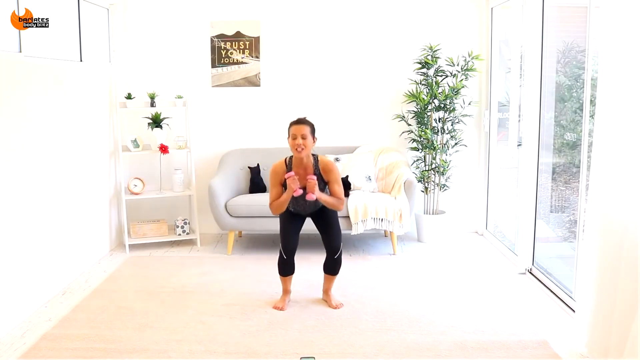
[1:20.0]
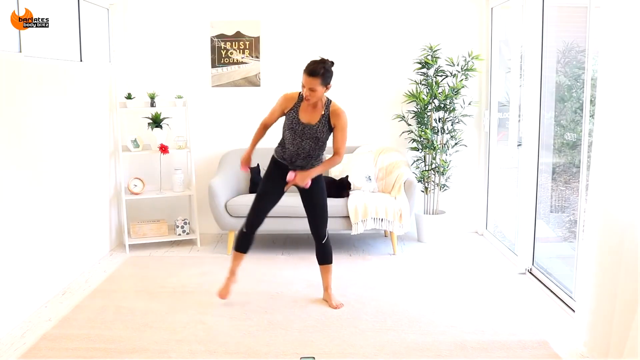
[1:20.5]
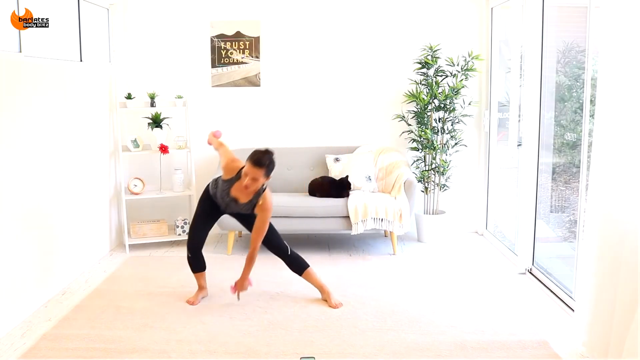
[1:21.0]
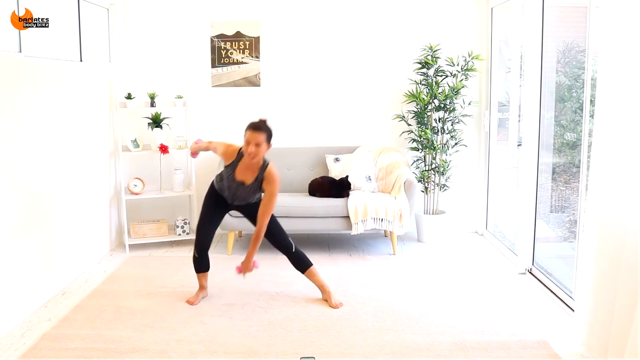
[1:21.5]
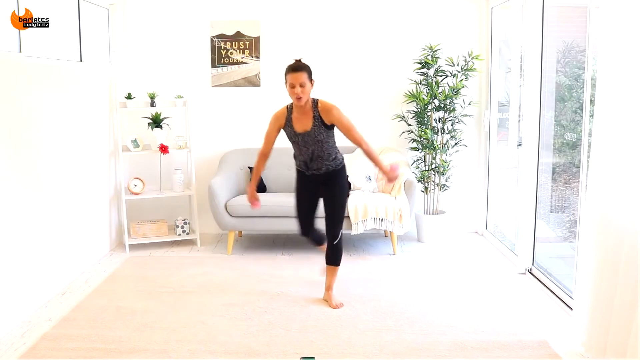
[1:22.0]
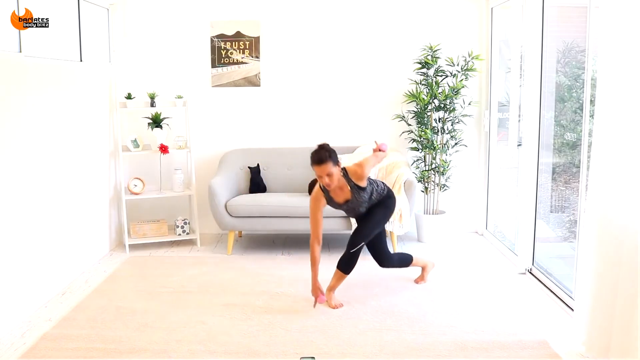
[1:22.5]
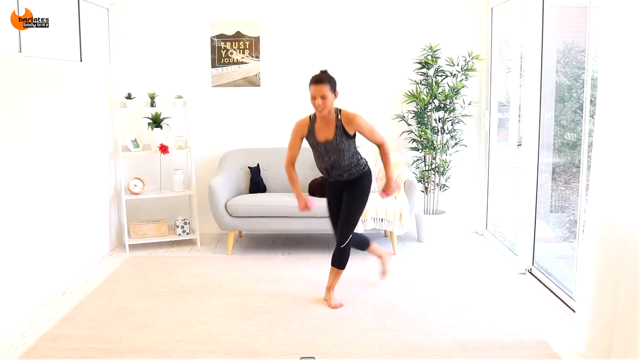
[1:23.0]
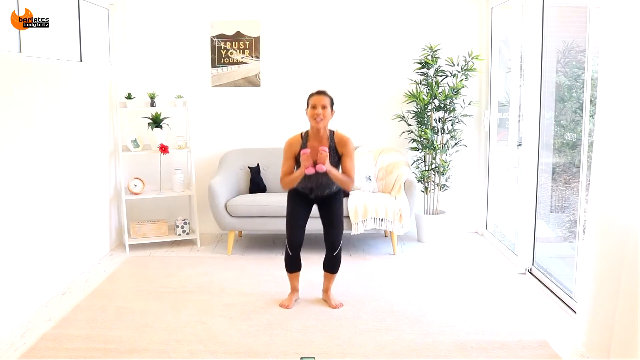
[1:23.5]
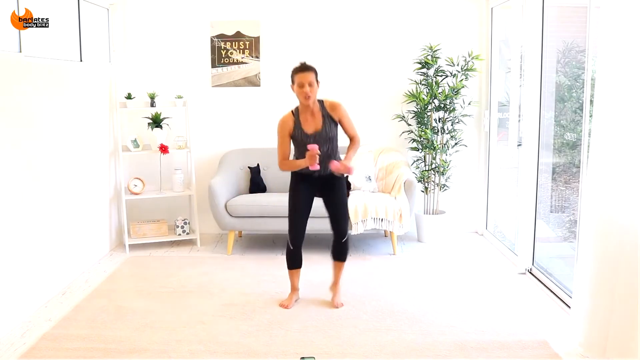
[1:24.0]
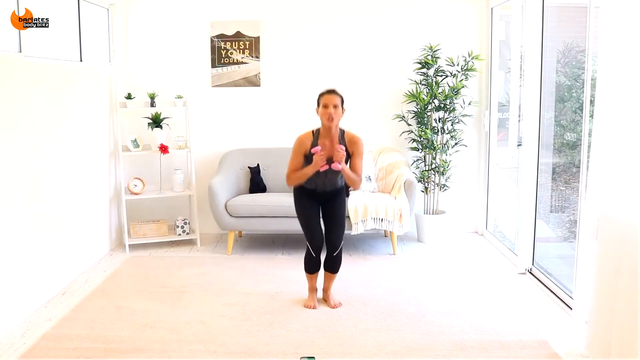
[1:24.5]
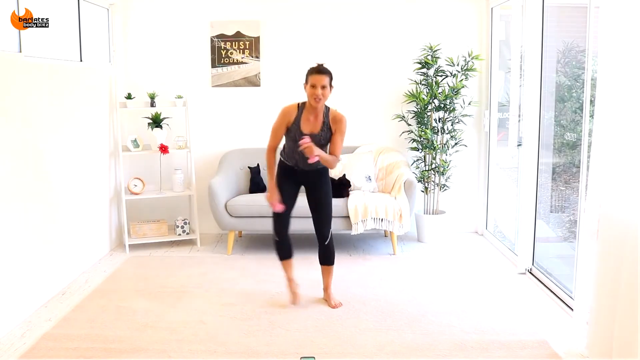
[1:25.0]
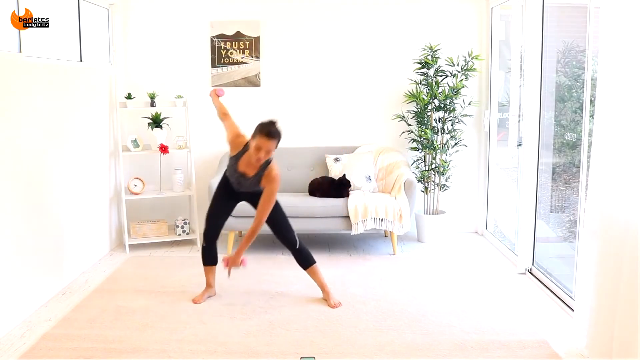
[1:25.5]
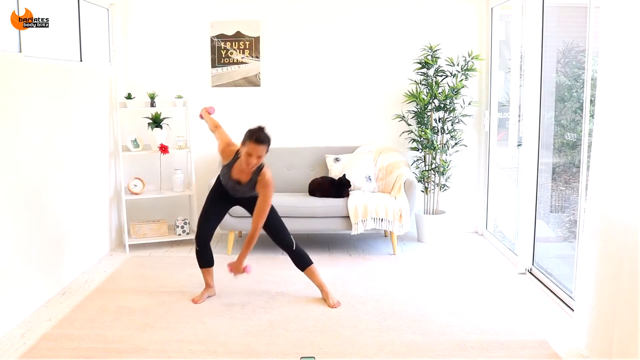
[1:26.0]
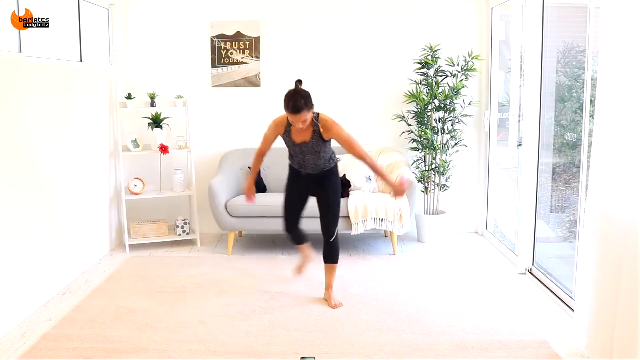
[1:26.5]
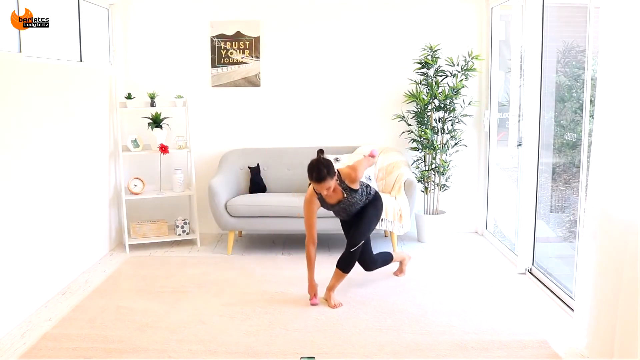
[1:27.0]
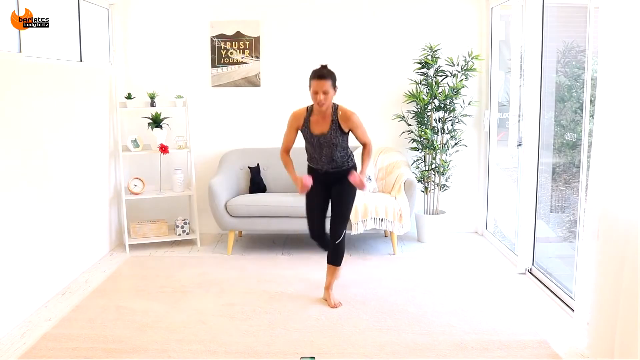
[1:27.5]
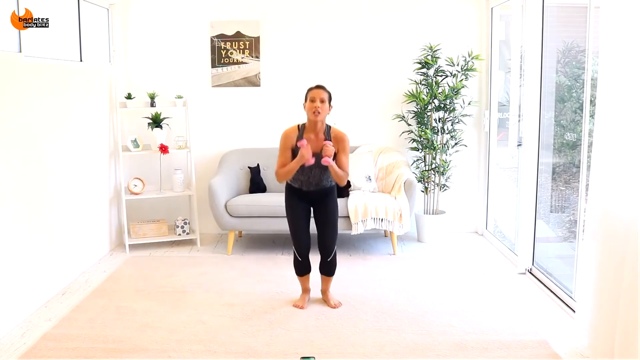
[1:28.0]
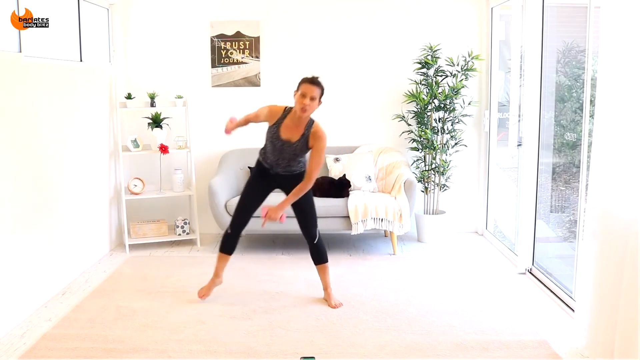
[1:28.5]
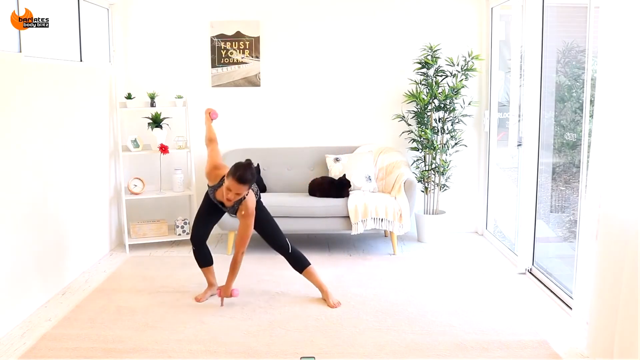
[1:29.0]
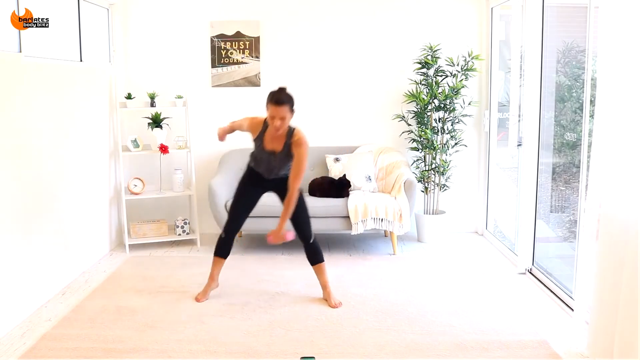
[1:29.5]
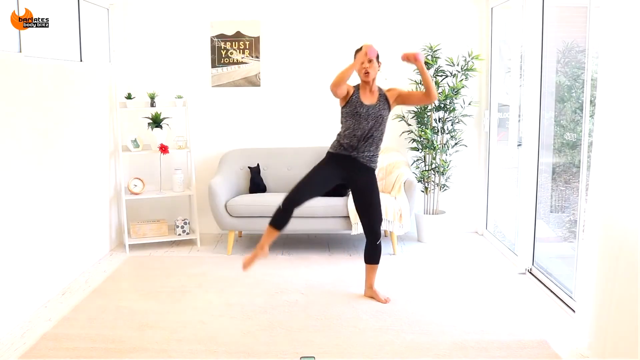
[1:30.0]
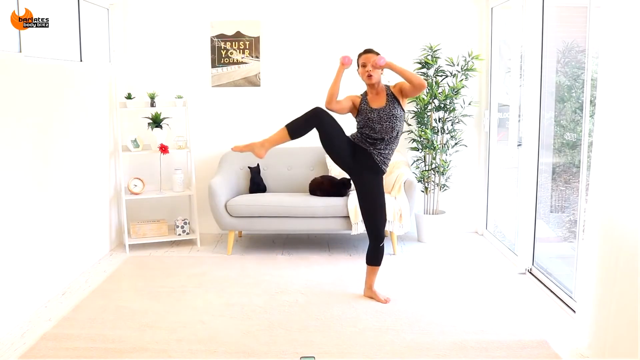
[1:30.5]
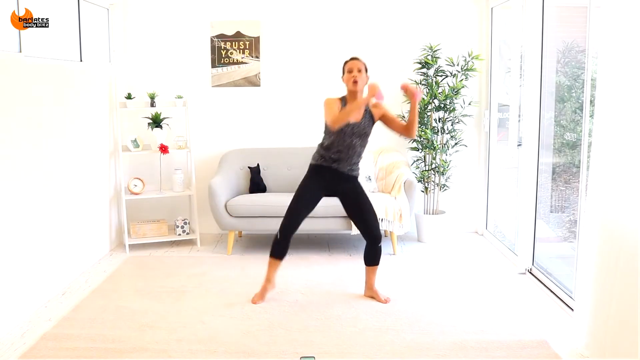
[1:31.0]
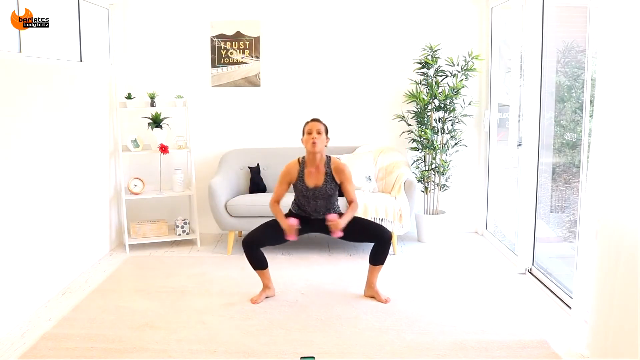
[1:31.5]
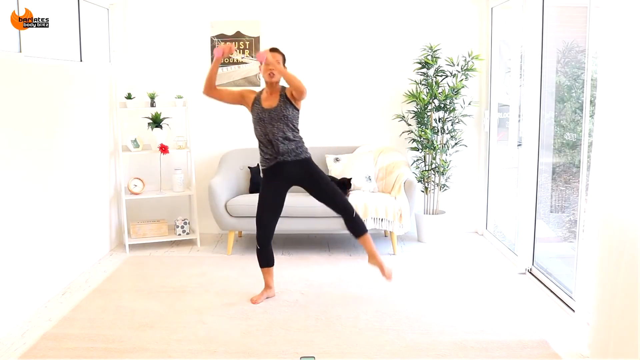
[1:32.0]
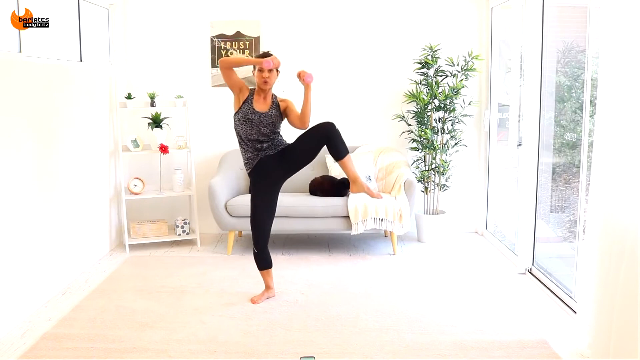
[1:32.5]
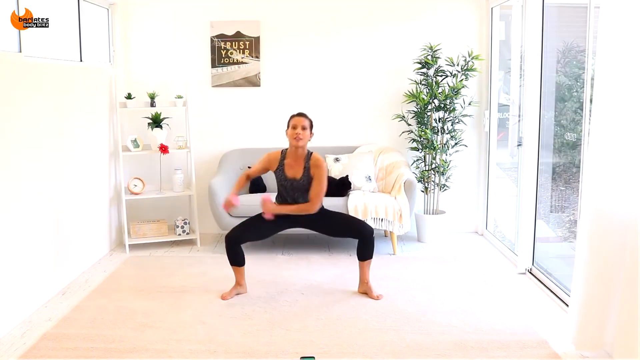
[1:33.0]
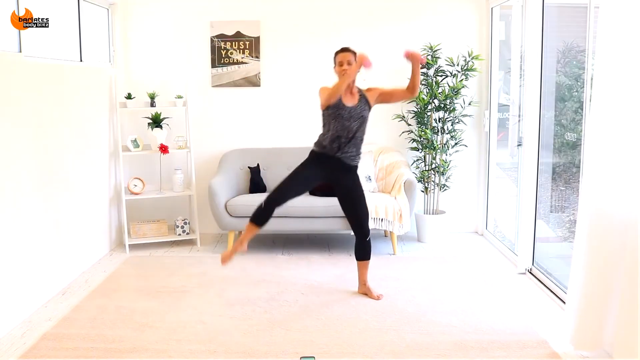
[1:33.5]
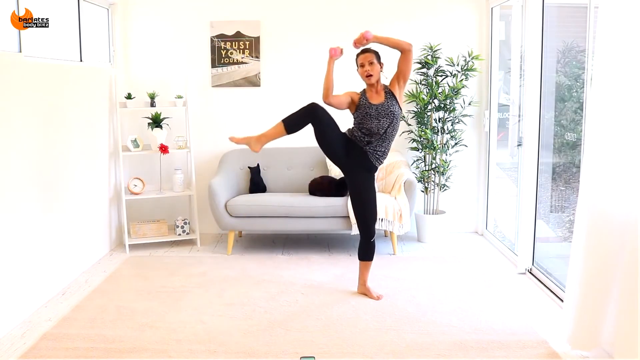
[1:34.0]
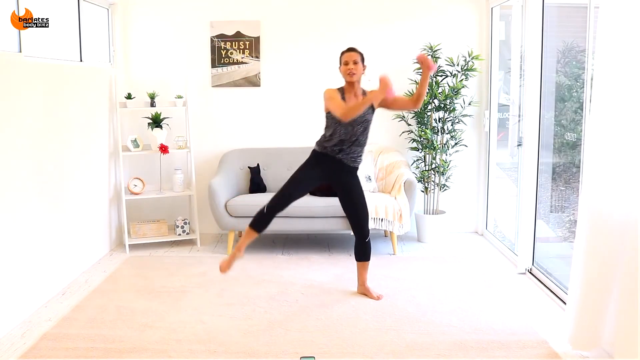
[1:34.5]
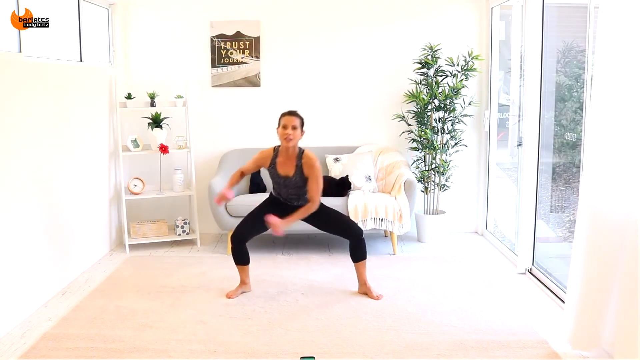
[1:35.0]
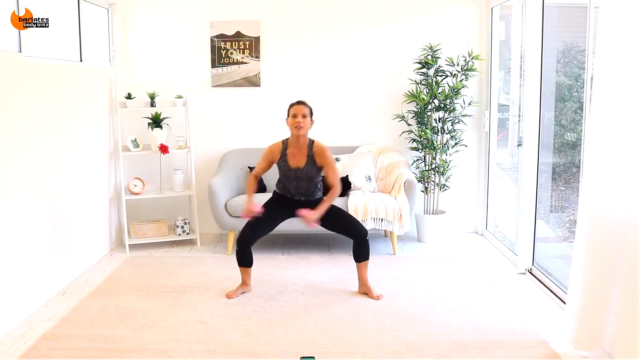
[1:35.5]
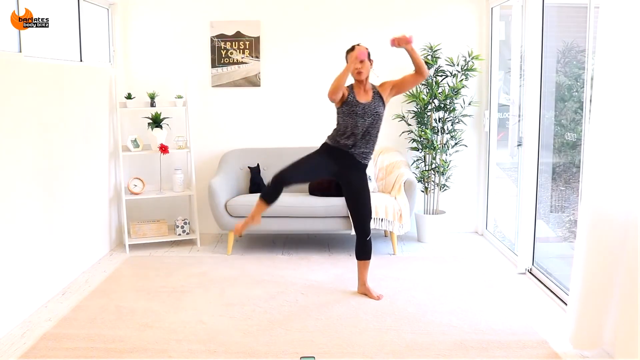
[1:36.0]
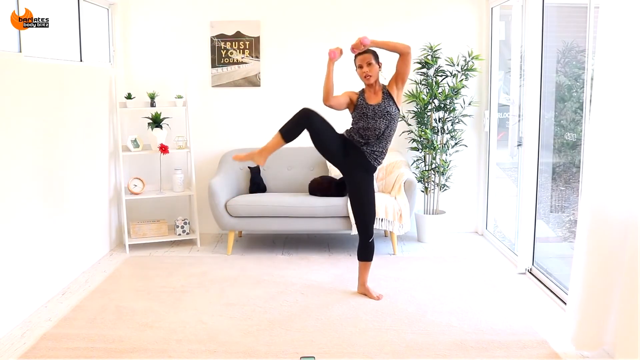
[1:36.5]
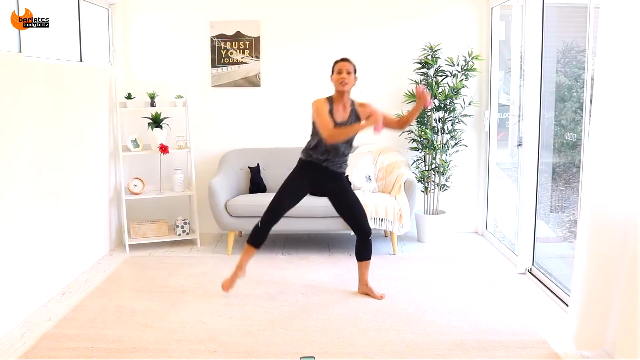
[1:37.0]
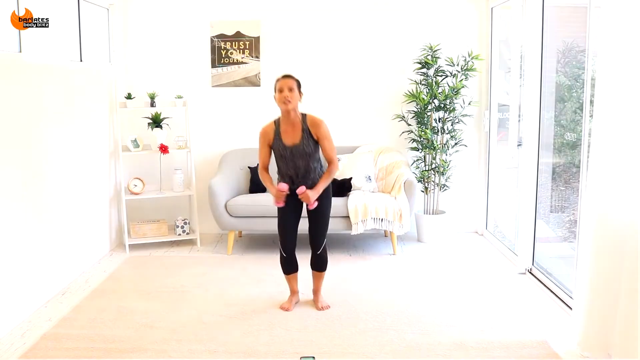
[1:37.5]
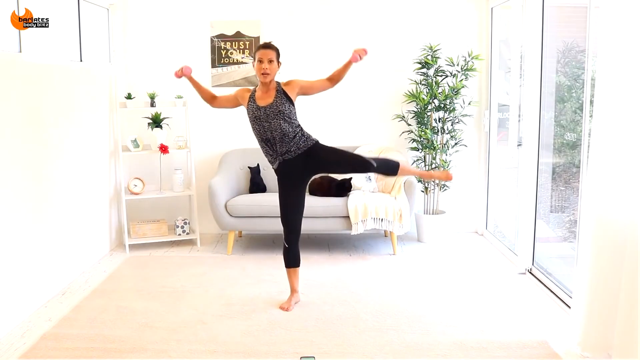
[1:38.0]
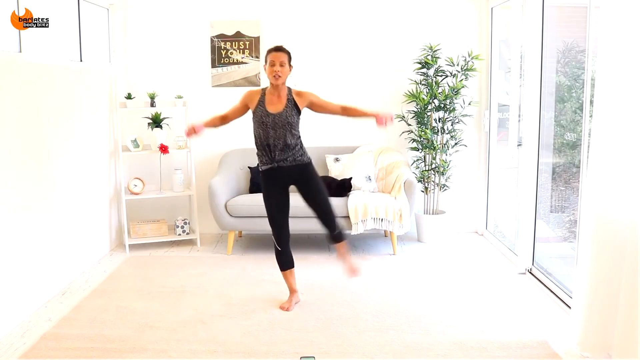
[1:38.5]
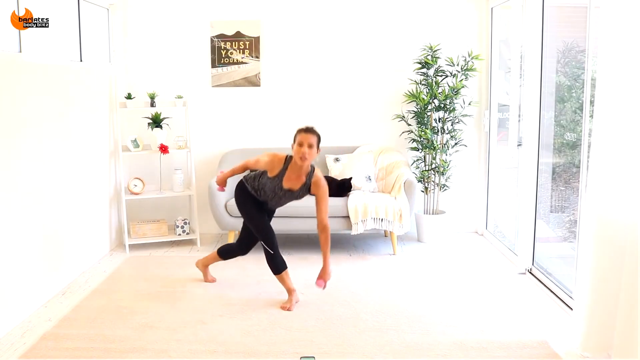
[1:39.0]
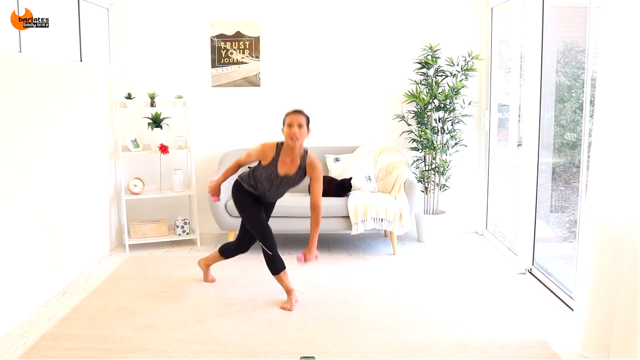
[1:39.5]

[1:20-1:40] The woman continues with side lunges into curtsy lunges, now bringing one arm to the ground and one arm back while still holding the two pink weights. She then does a quick squat in the middle with her feet almost touching, narrower than a typical squat. She combines multiple steps: squatting in the middle, lunging to the side and touching the ground, then doing a curtsy lunge and touching the ground with her other hand. She speeds up a little. Finally she does a lunge, but instead of going into a curtsy lunge she lifts her leg up and does a side crunch in which her elbow, still holding the weight, touches her knee as she brings it up. She does this twice on both sides.